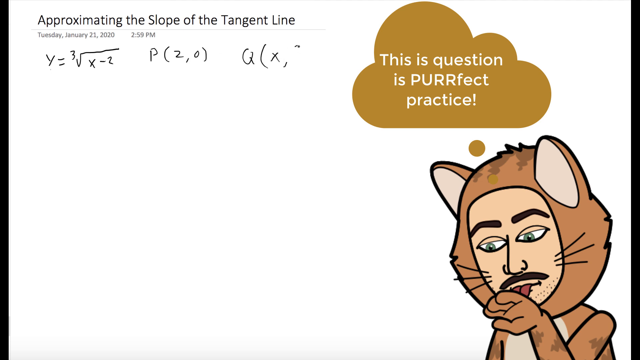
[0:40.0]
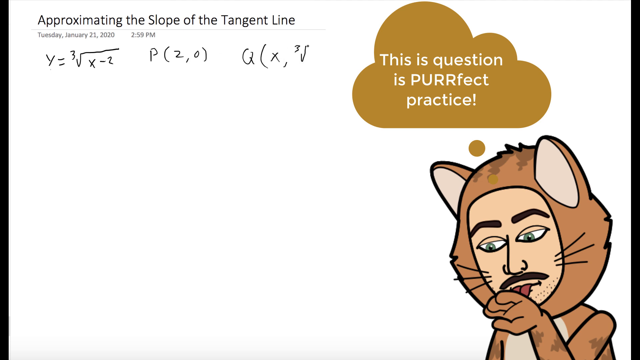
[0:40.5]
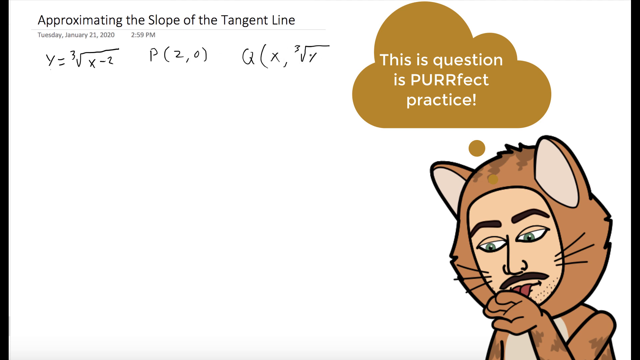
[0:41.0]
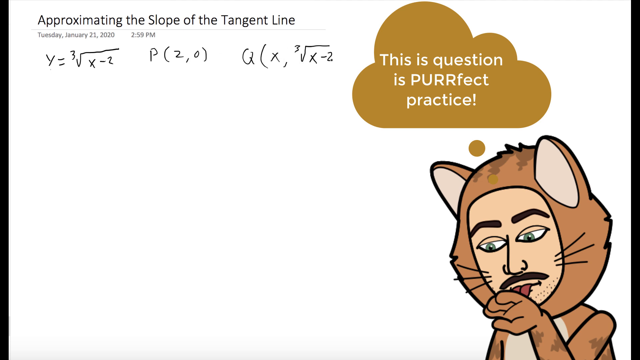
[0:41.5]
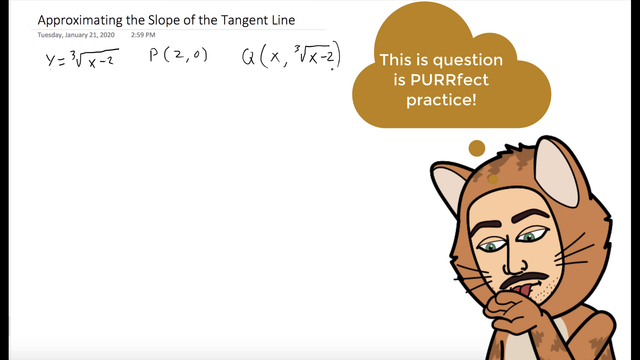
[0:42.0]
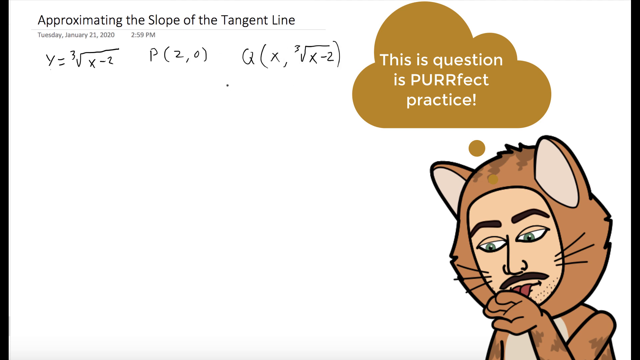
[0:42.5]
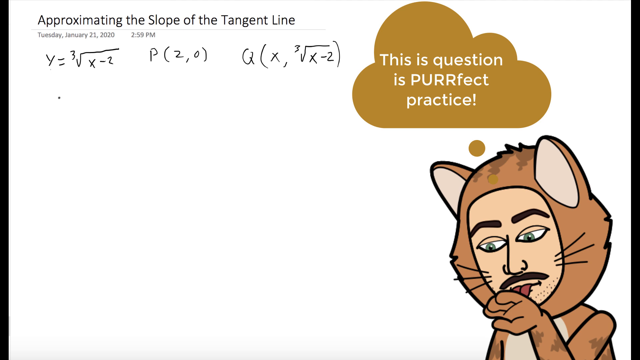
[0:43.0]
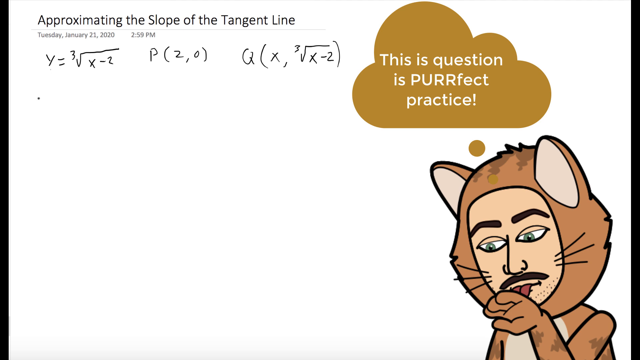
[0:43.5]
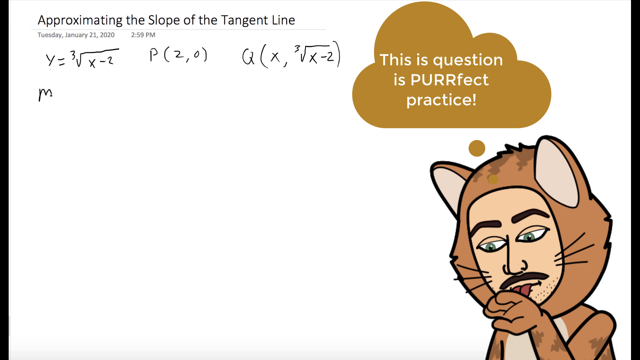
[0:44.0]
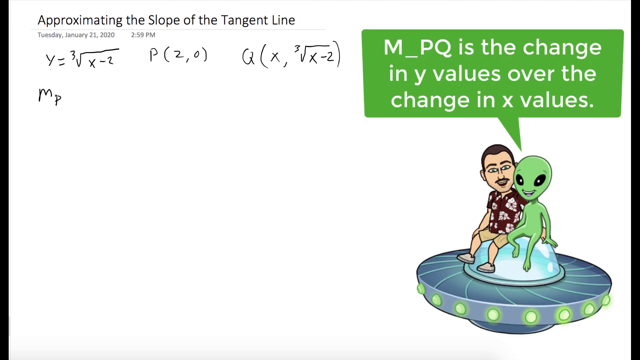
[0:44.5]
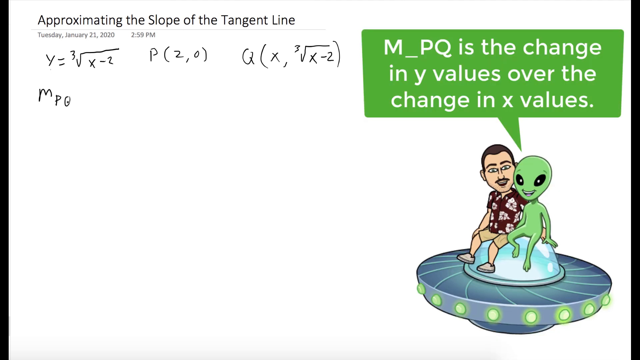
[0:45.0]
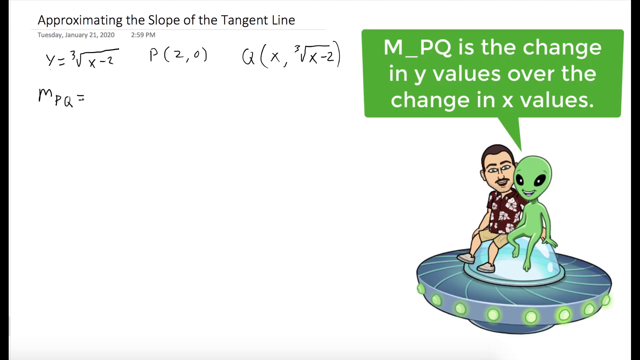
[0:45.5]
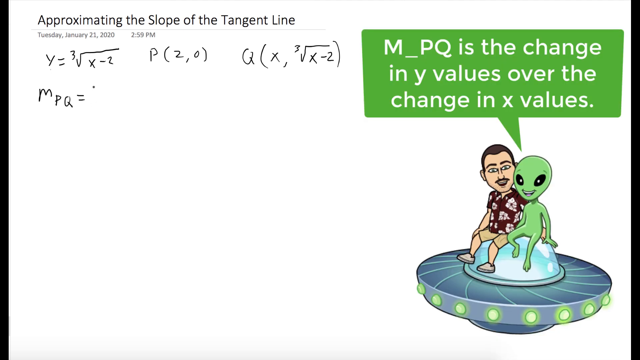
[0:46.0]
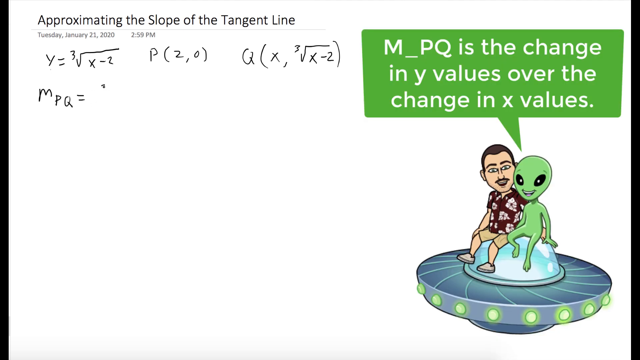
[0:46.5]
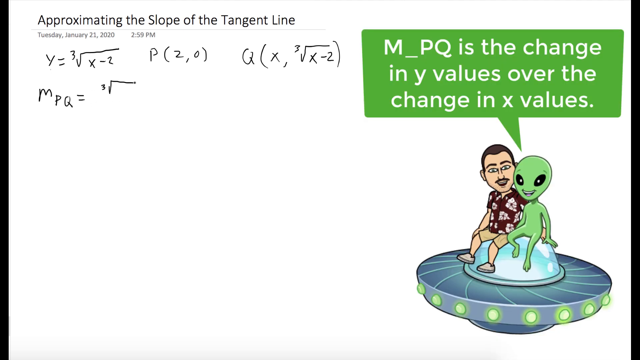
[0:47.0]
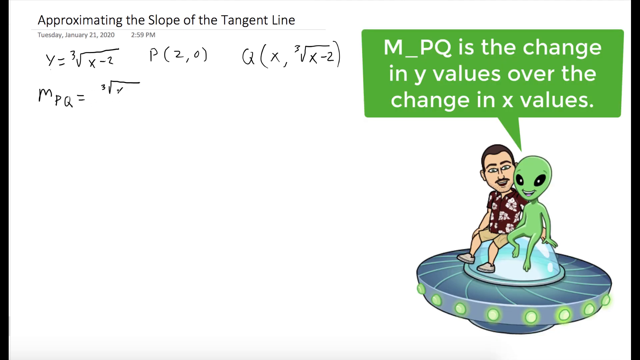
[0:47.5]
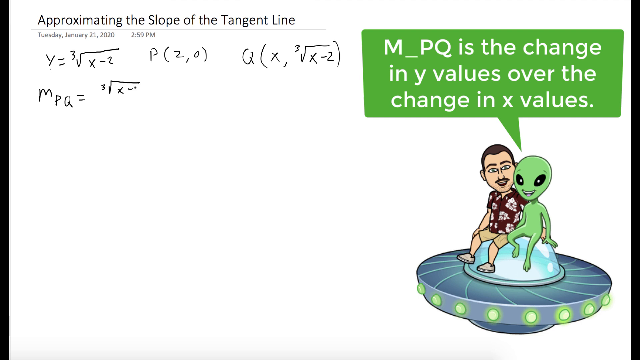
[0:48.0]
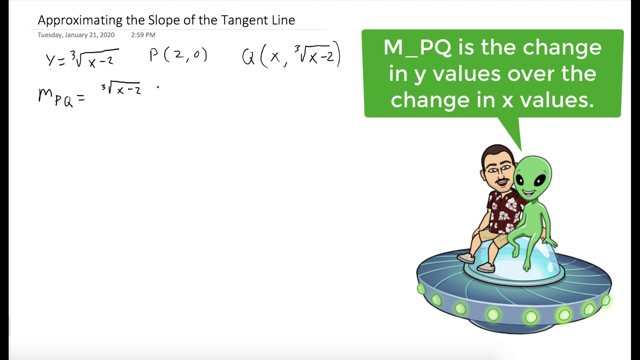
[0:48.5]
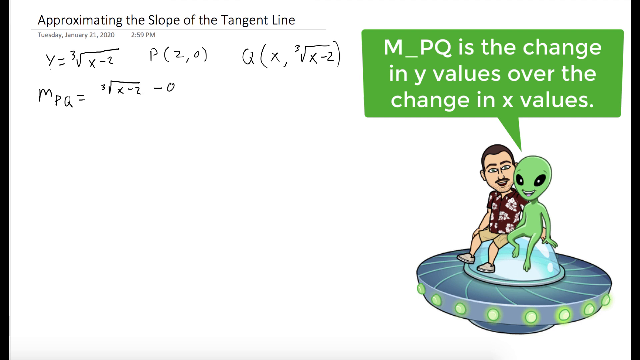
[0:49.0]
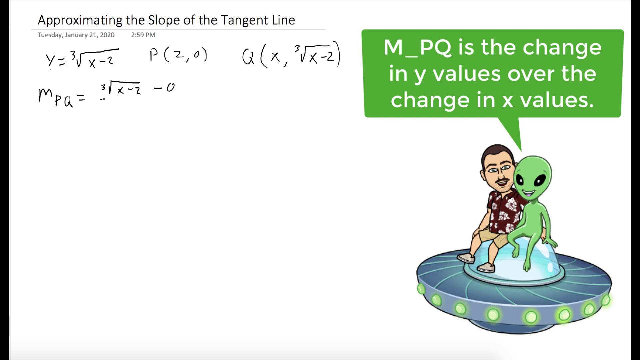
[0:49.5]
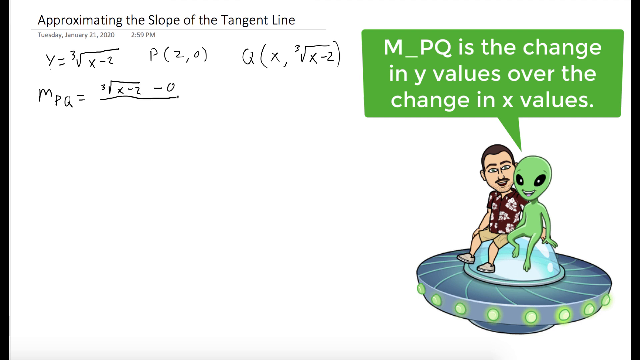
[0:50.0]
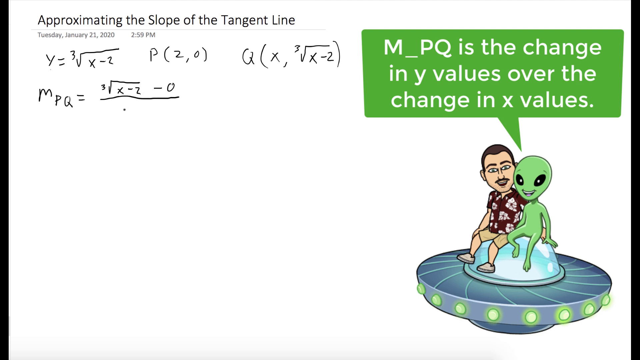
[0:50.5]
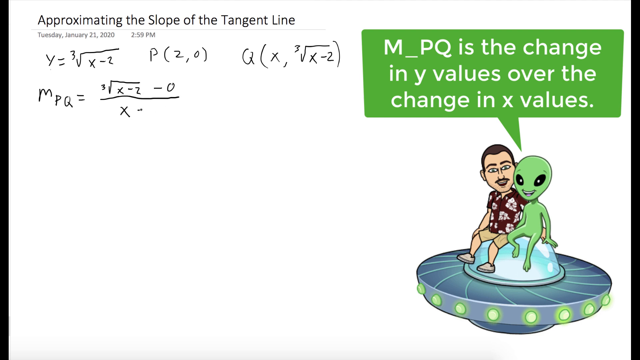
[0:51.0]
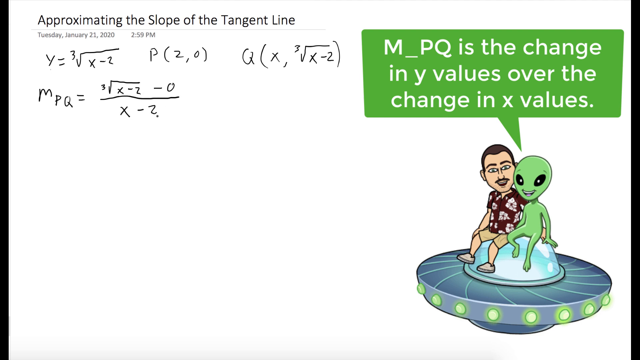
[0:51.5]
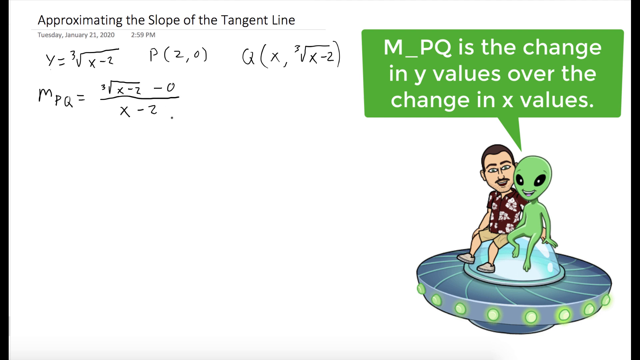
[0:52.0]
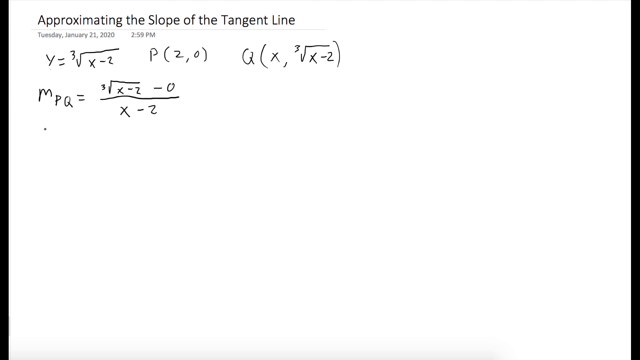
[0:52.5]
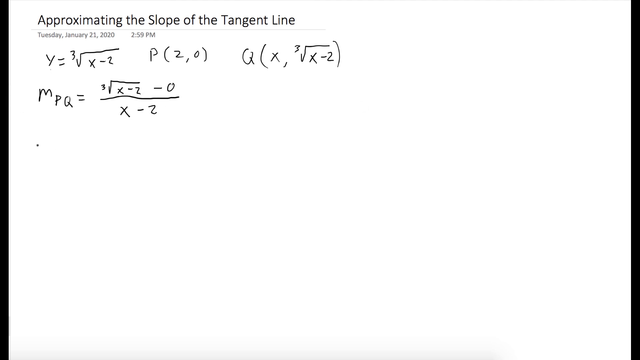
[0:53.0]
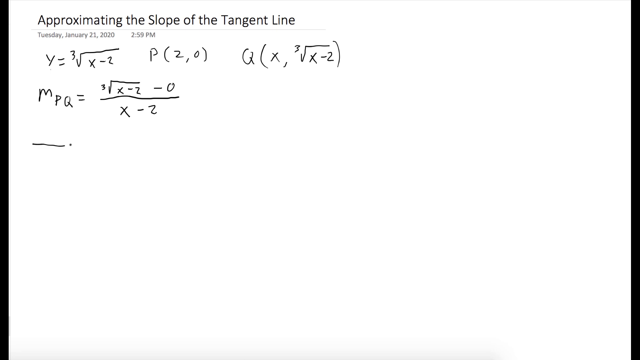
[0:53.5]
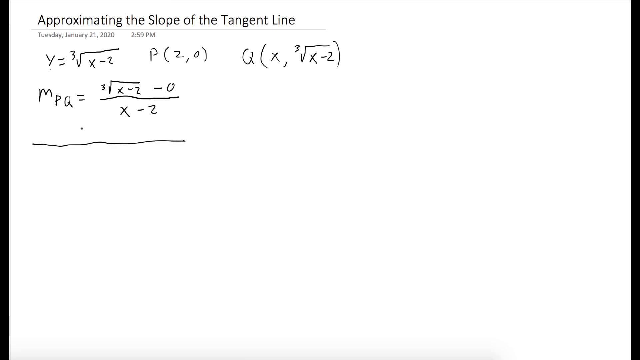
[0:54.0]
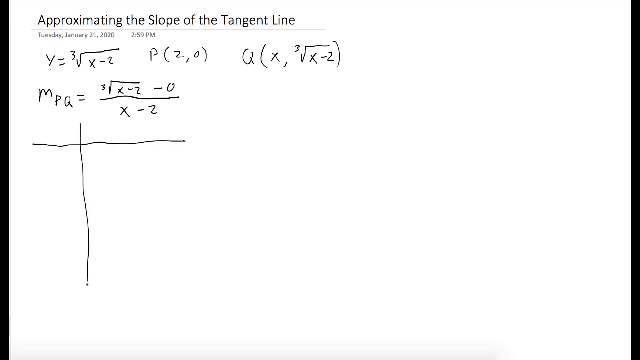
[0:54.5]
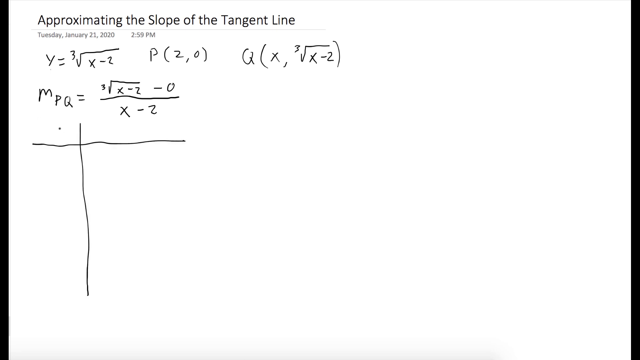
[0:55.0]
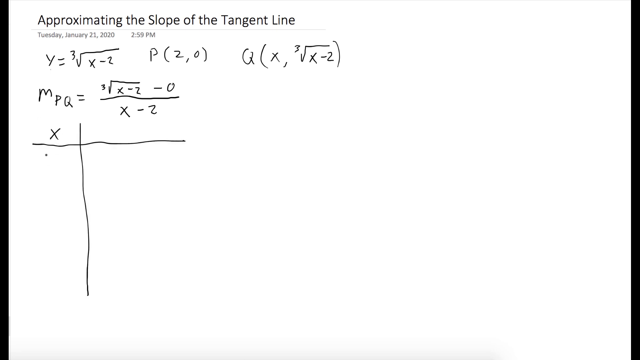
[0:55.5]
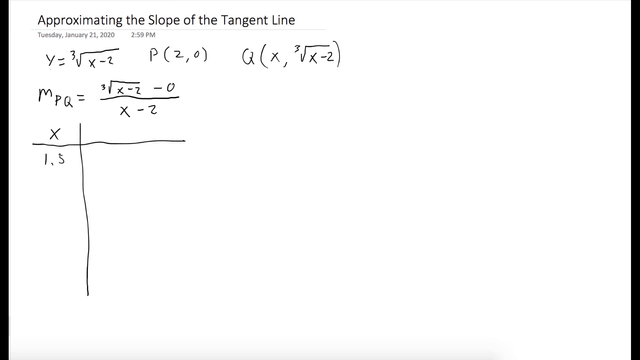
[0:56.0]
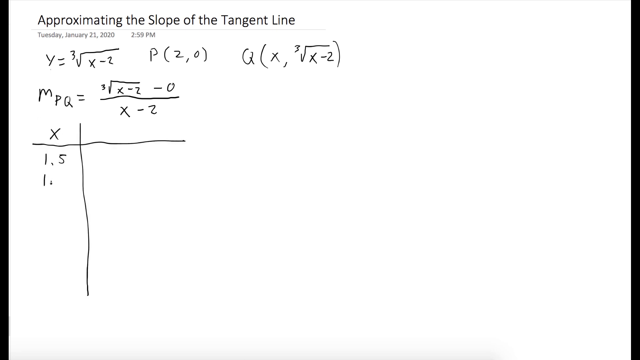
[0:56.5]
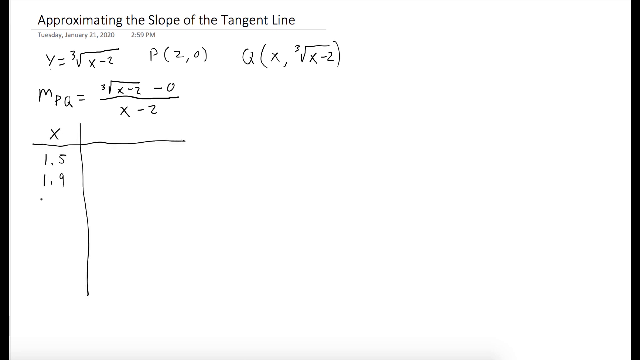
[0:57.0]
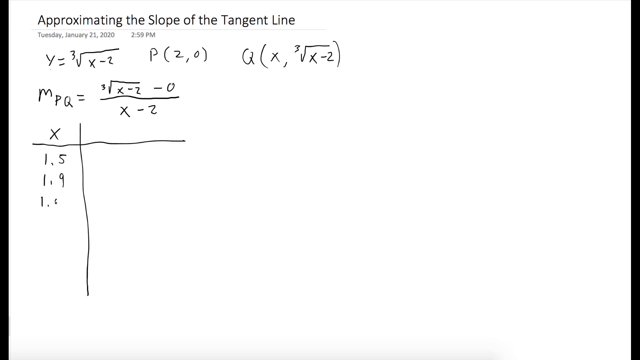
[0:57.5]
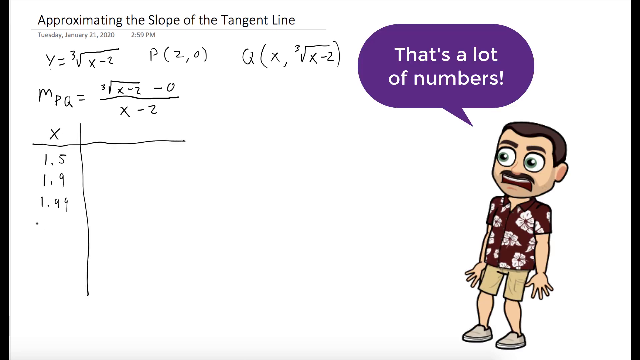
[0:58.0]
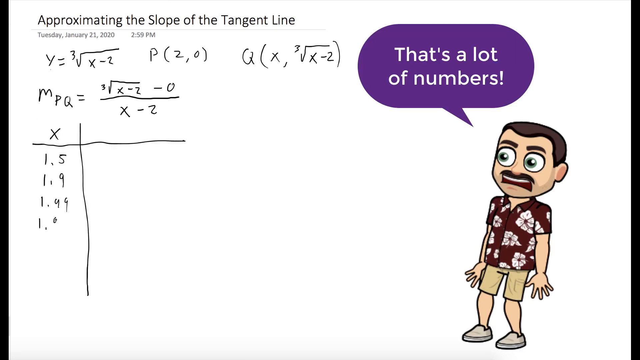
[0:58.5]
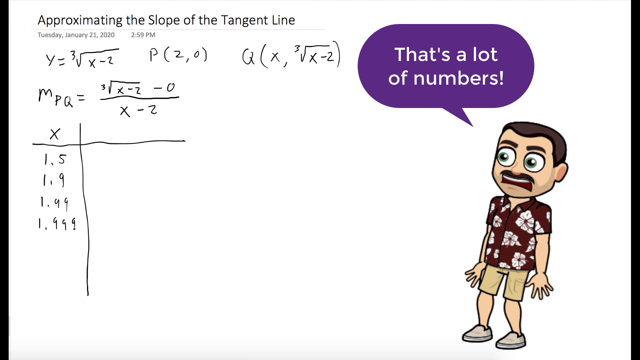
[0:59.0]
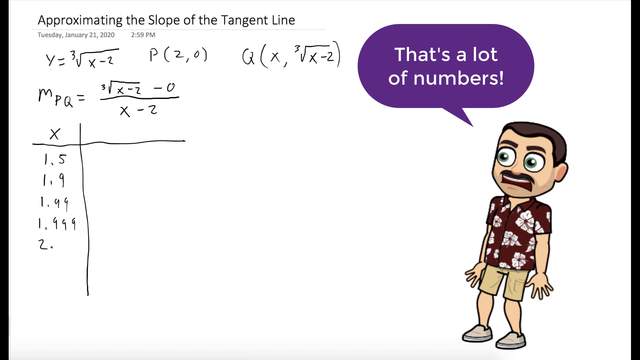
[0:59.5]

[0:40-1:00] The picture of the lion is in the left-hand corner, and "P (2, 0)" is written along with a point Q. The cursor finishes the equation of the line, writing an expression for m PQ with x - 2 in it. A table appears with a column going down the left side headed x, and a box with no line around it that just looks like a box. Flashes of a green character appear on the right. Text says "m_PQ is the change in y values over the change in x values"; this is a bubble coming from a fictional green character that is sitting next to the man seen at the beginning.